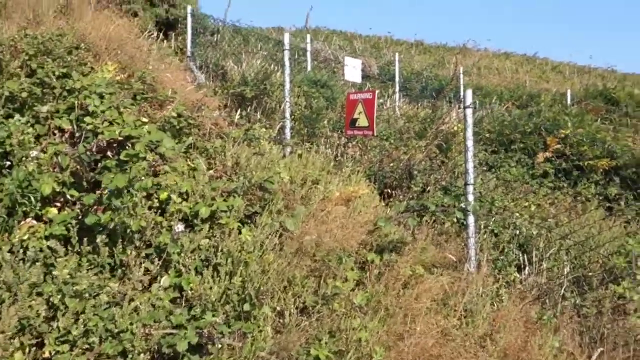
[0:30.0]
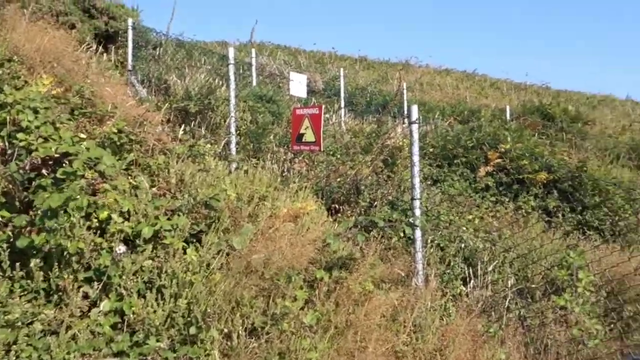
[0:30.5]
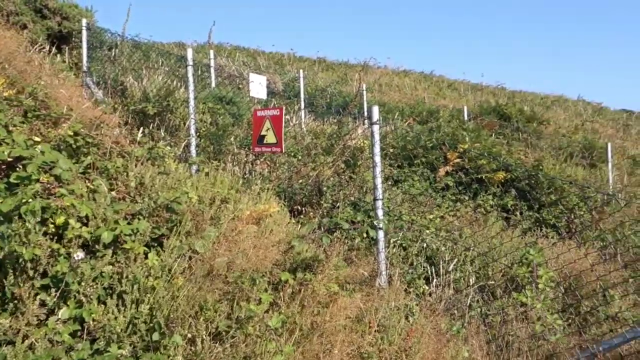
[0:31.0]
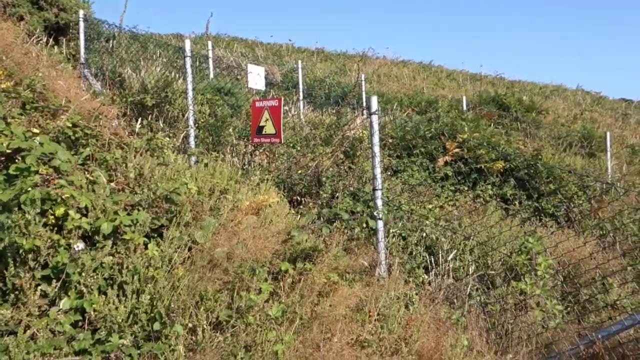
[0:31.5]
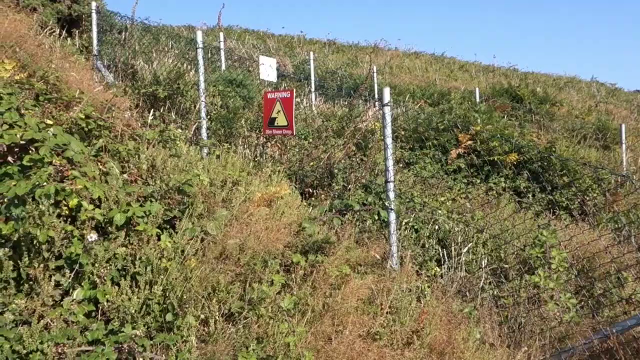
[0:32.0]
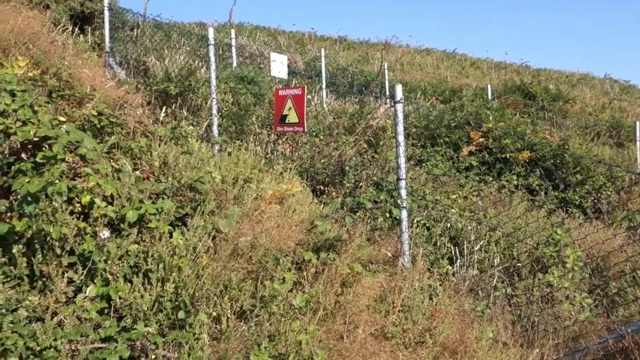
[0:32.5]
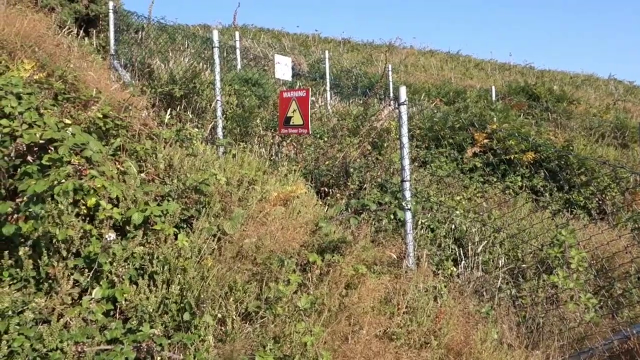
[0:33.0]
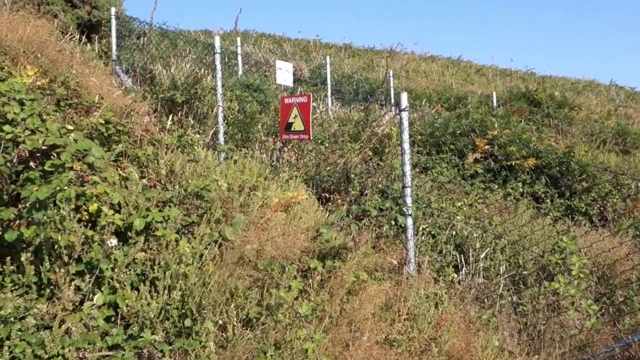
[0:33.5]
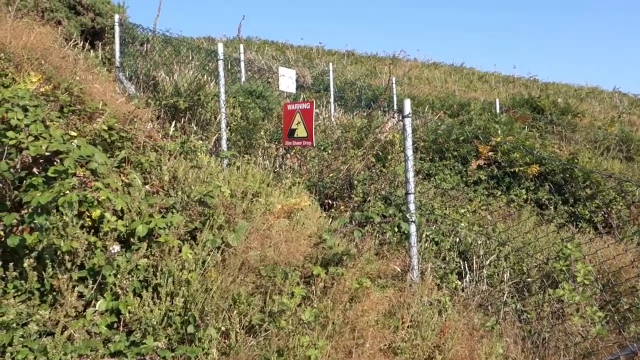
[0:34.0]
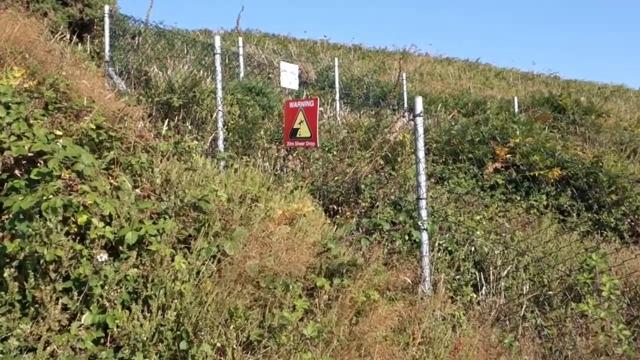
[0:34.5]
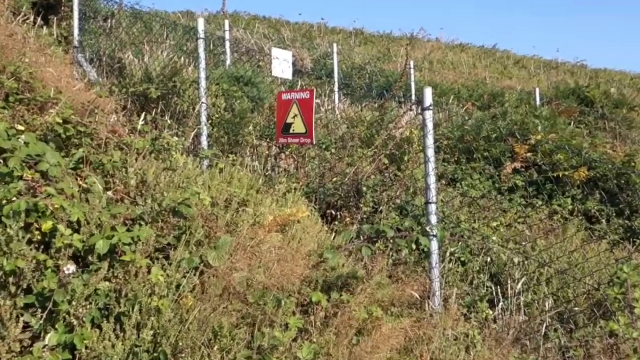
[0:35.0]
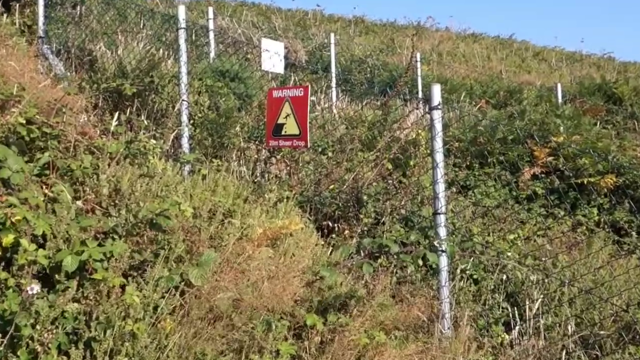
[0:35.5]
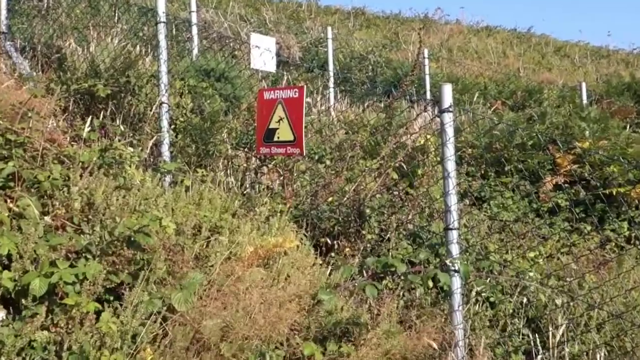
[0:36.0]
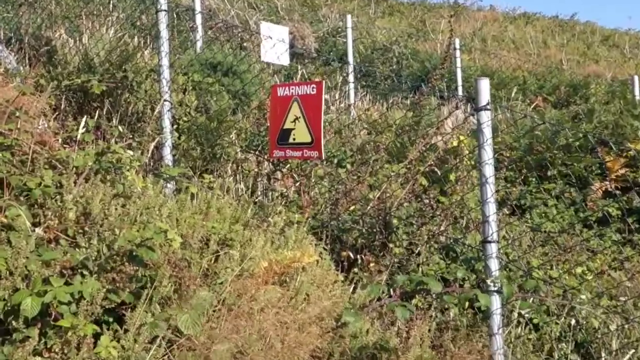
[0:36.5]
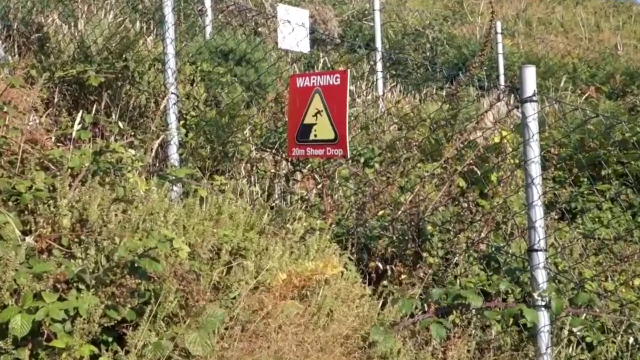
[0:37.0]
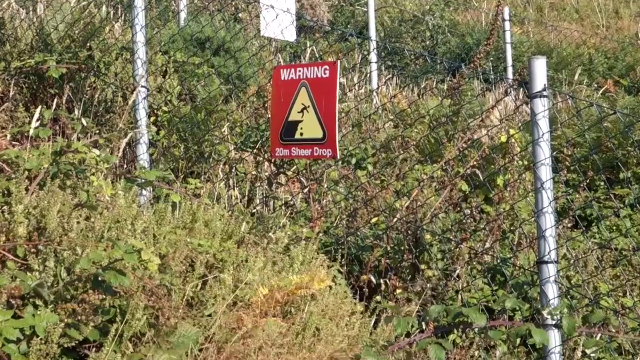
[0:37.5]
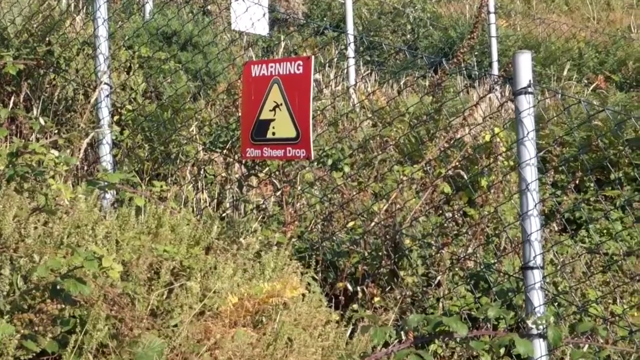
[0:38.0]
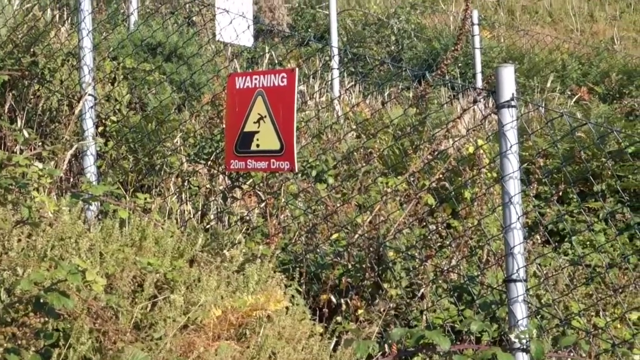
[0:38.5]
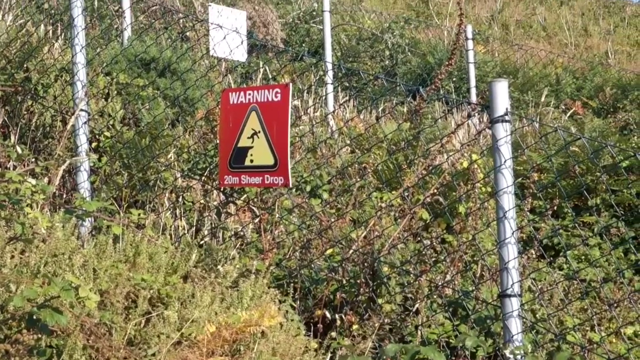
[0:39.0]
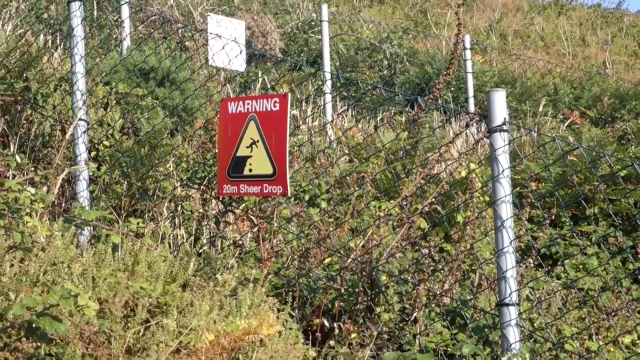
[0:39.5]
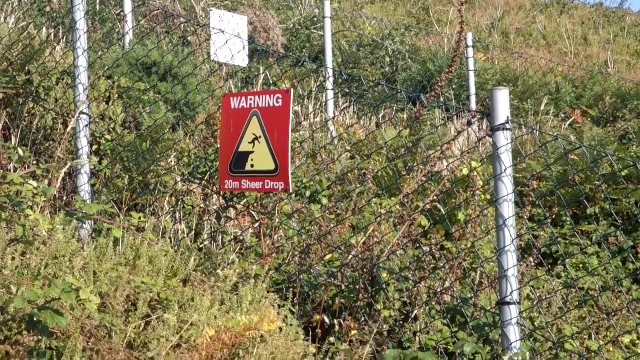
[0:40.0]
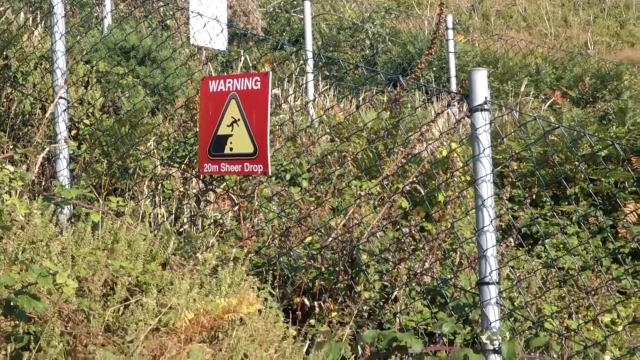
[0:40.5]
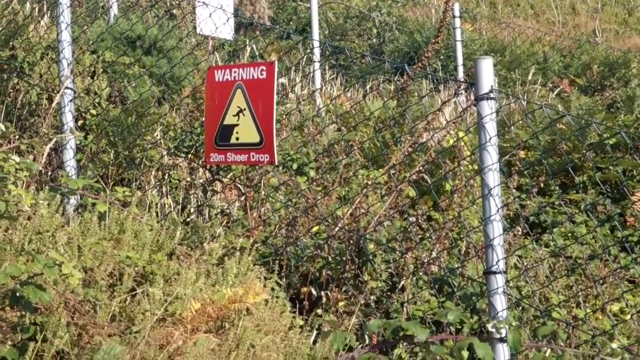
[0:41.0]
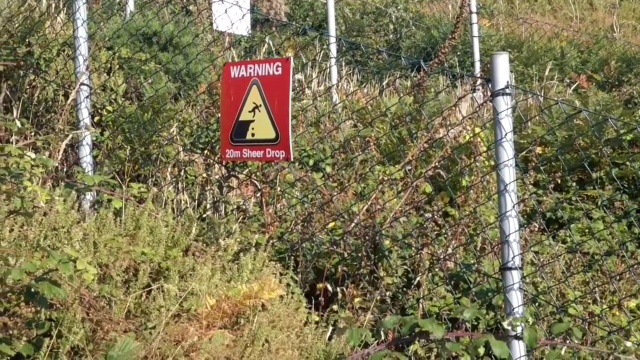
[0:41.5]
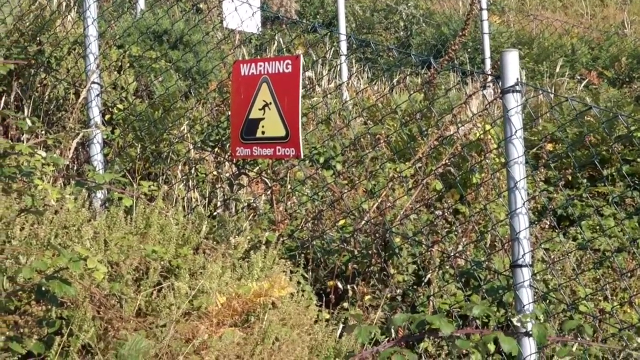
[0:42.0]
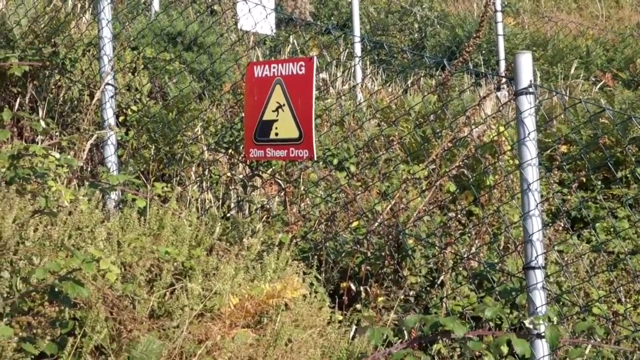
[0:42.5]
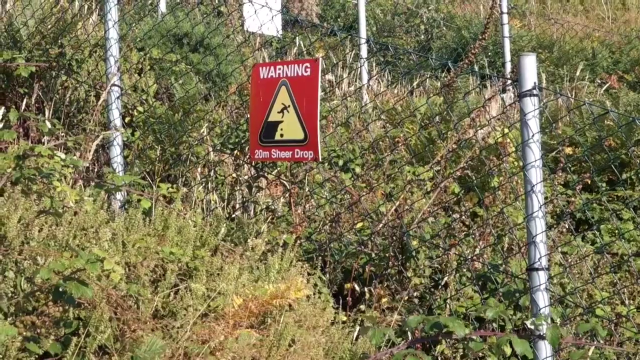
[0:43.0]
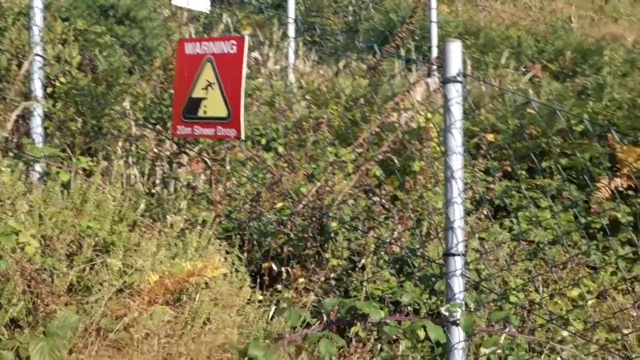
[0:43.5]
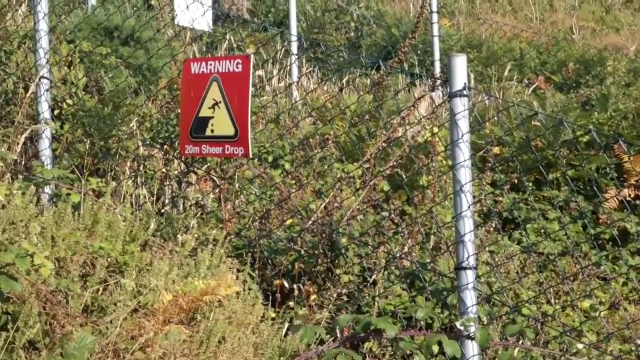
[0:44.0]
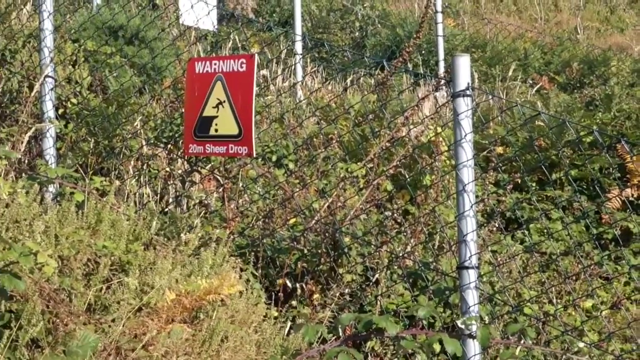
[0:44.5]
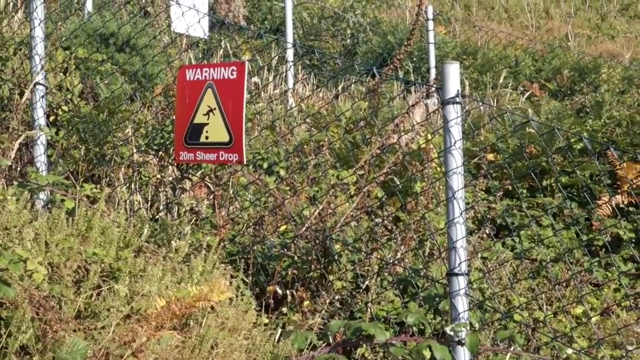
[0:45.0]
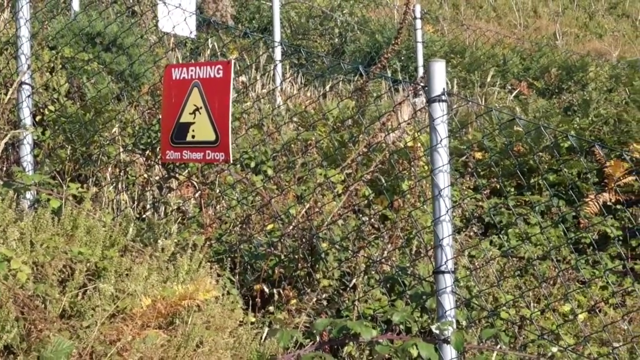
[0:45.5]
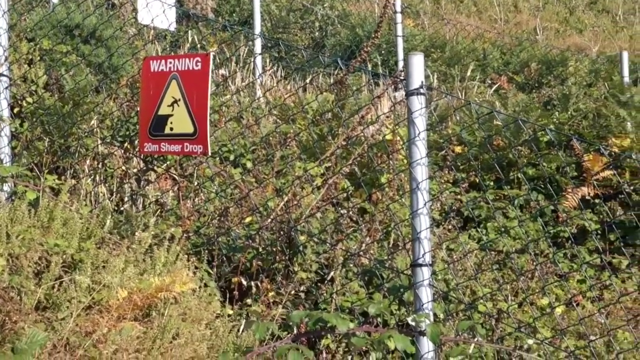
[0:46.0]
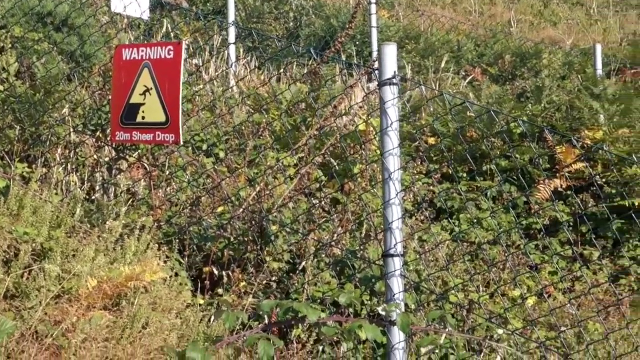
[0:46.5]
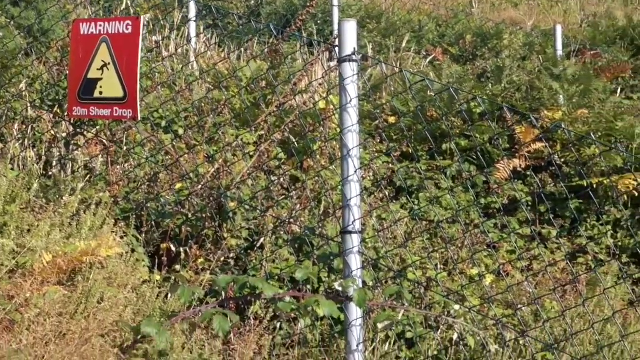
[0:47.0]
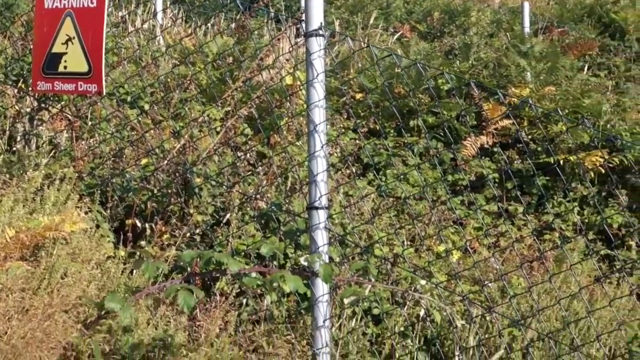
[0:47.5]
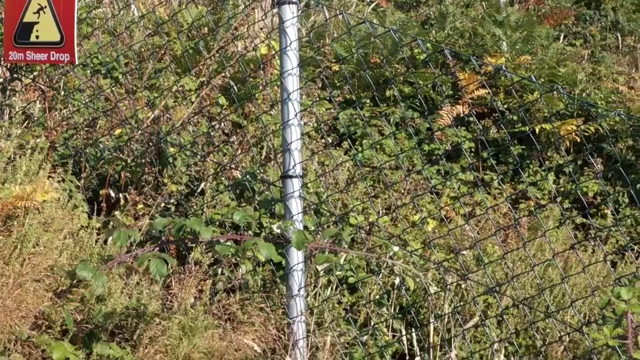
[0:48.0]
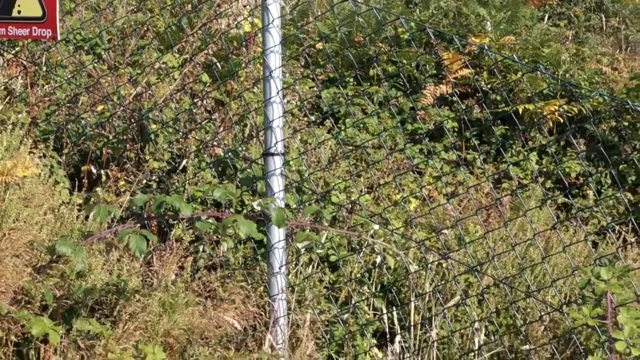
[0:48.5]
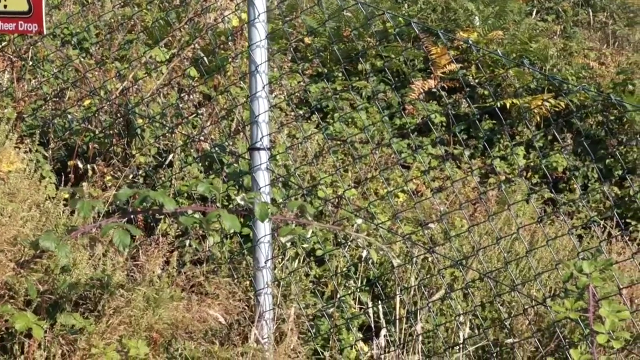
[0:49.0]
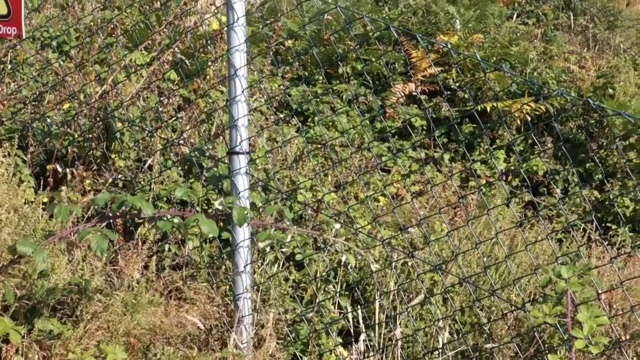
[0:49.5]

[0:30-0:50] The shot opens on a pole. After a few moments the camera zooms very slowly onto a poster hung on a metal net, which is tied between two metal poles. The poster is almost square, or generally quadrangular, and red, with white inscriptions, one at the top and one at the bottom. In the center of the poster is a yellow triangle with a black border, containing a stylized man on the edge of a precipice; both the precipice and the man are black. The camera then moves slightly to the right, showing more vegetation and the right part of a metal net. Other hills are visible in the background, and in the upper right corner there is a completely cloudless blue sky.